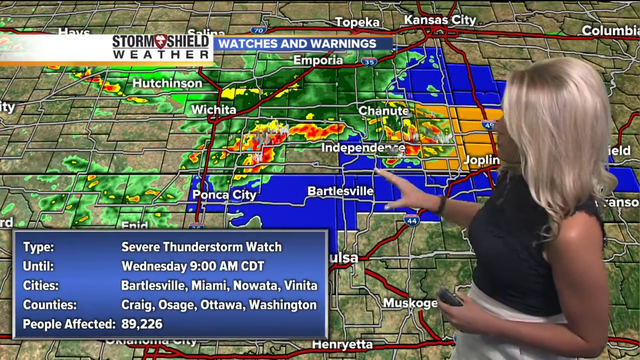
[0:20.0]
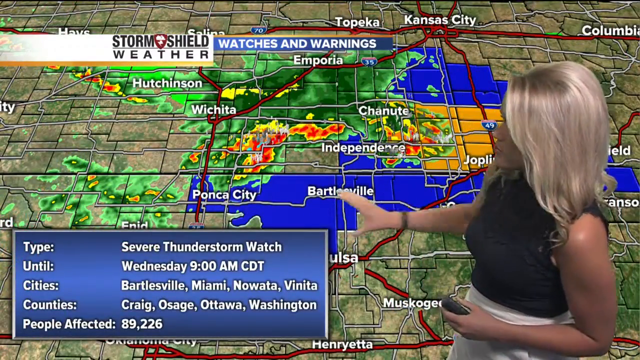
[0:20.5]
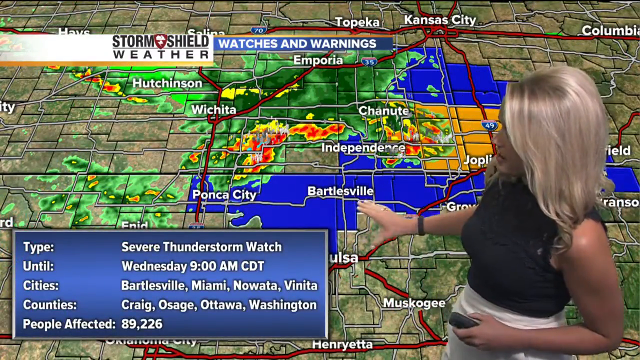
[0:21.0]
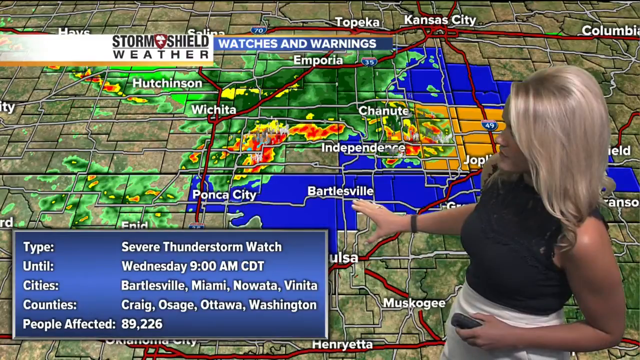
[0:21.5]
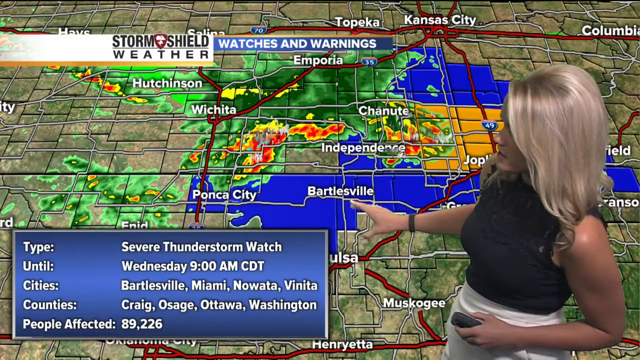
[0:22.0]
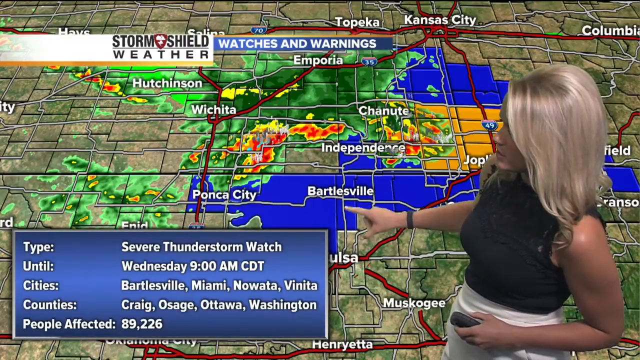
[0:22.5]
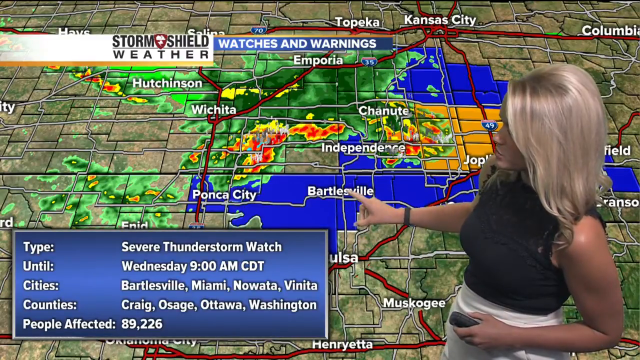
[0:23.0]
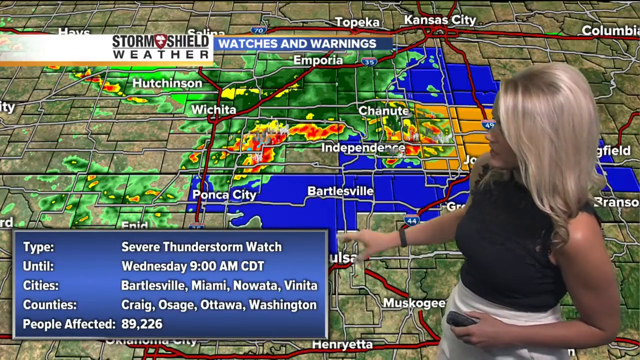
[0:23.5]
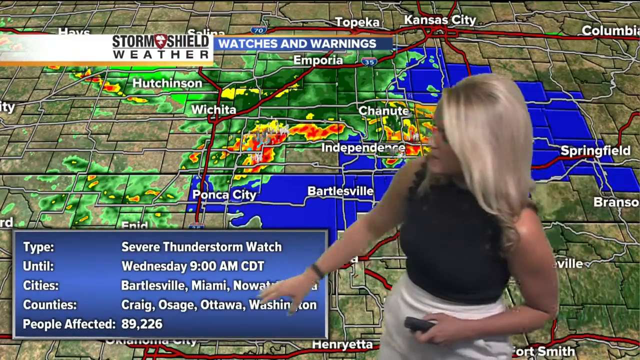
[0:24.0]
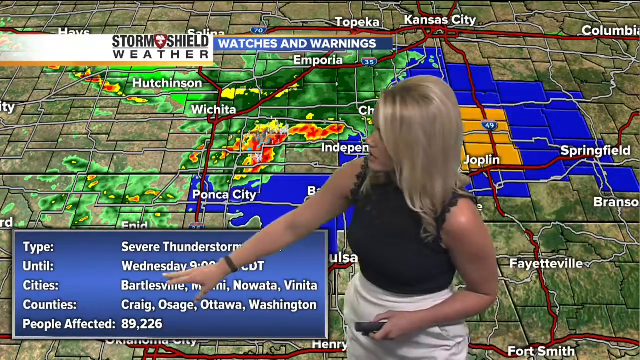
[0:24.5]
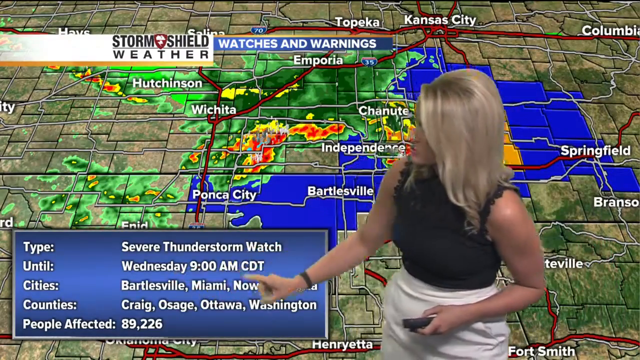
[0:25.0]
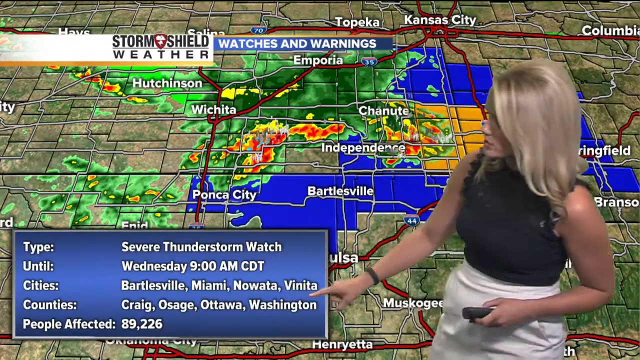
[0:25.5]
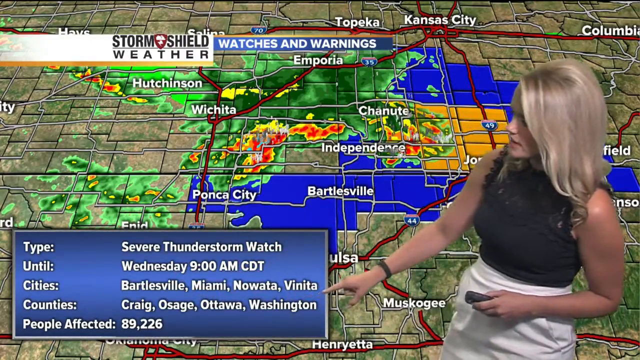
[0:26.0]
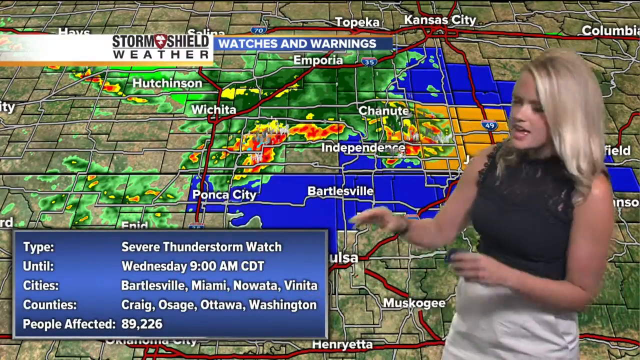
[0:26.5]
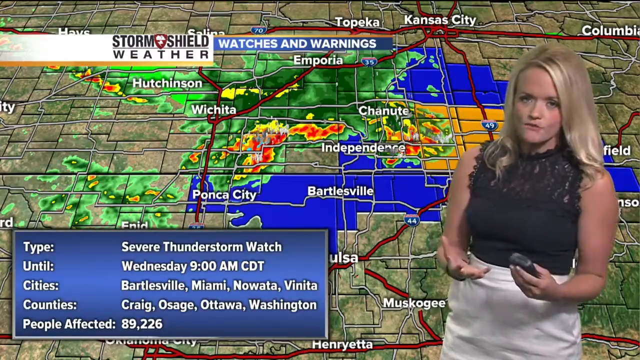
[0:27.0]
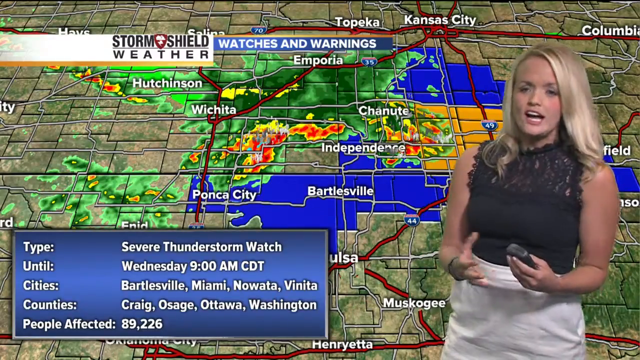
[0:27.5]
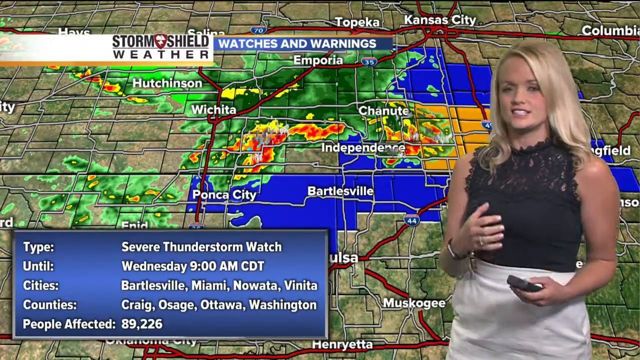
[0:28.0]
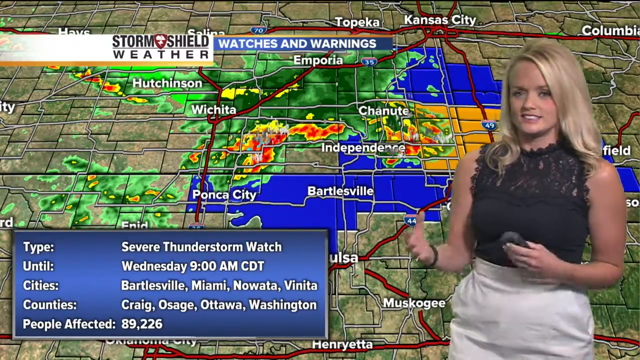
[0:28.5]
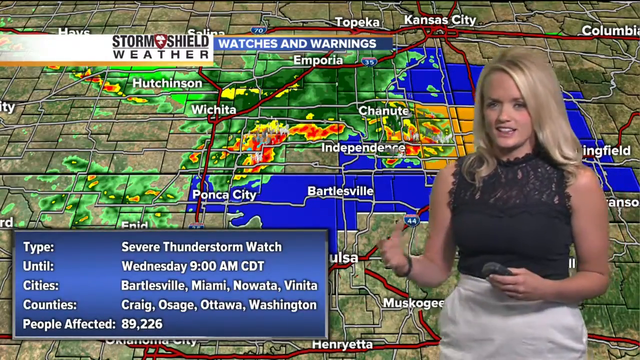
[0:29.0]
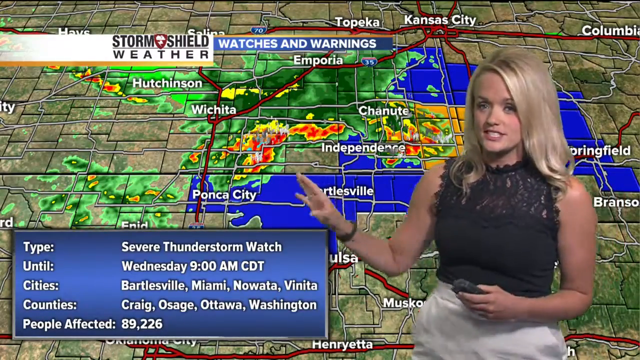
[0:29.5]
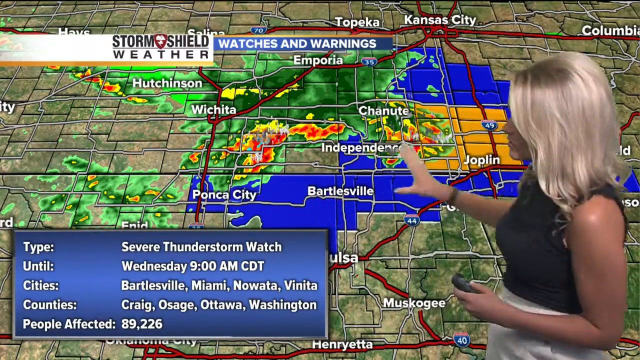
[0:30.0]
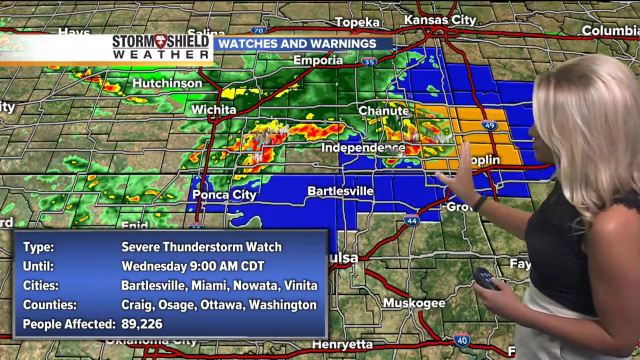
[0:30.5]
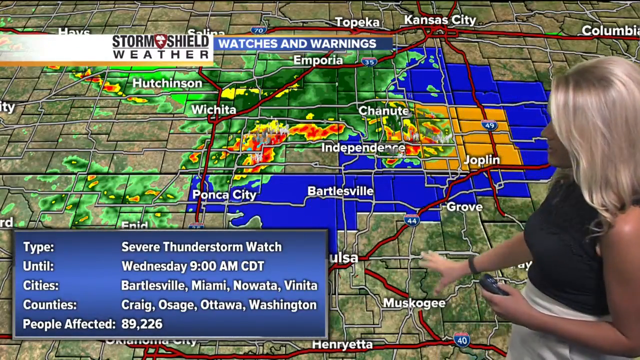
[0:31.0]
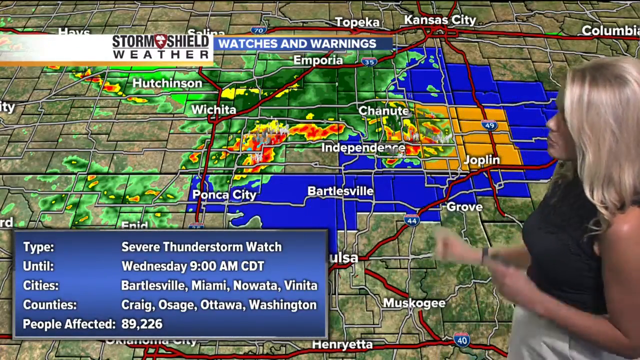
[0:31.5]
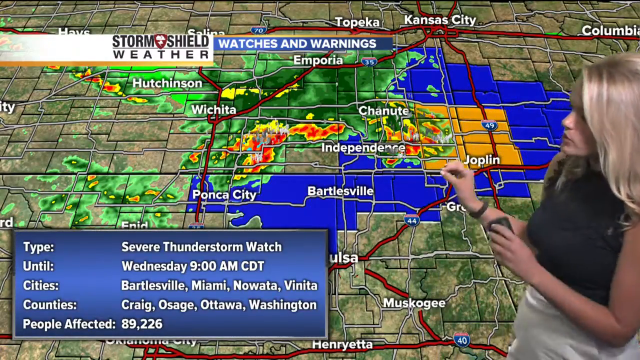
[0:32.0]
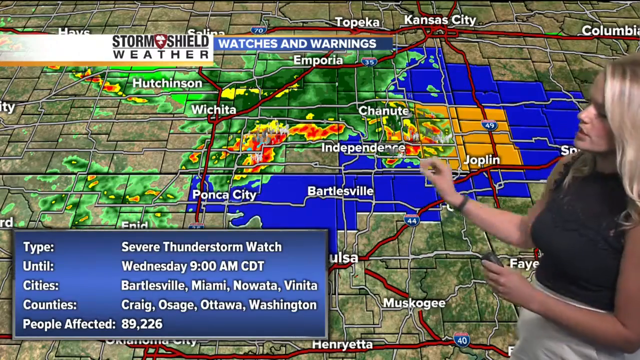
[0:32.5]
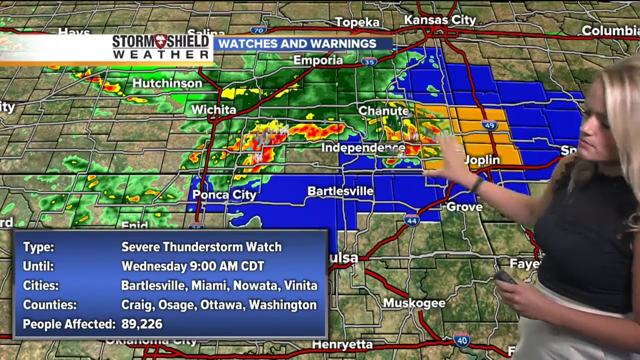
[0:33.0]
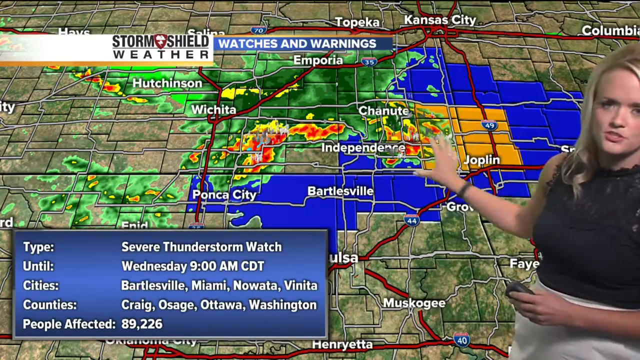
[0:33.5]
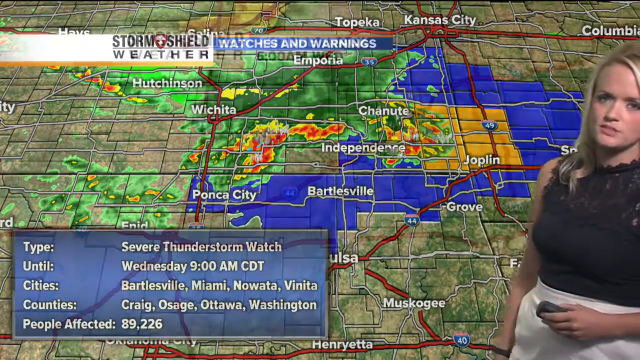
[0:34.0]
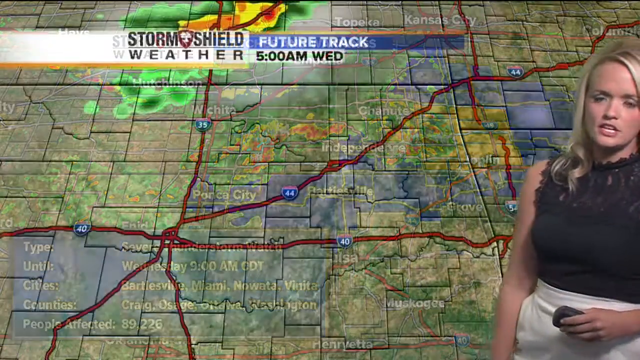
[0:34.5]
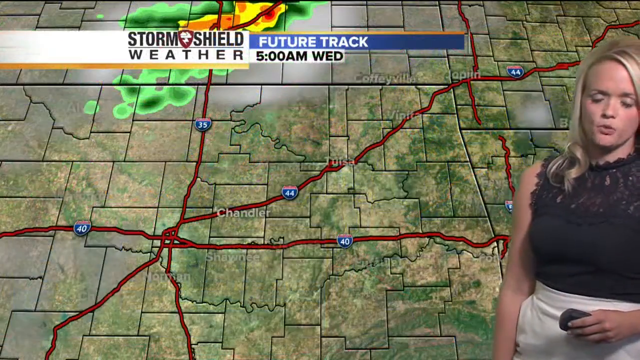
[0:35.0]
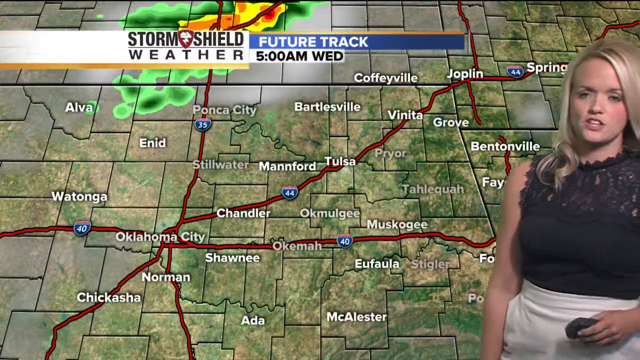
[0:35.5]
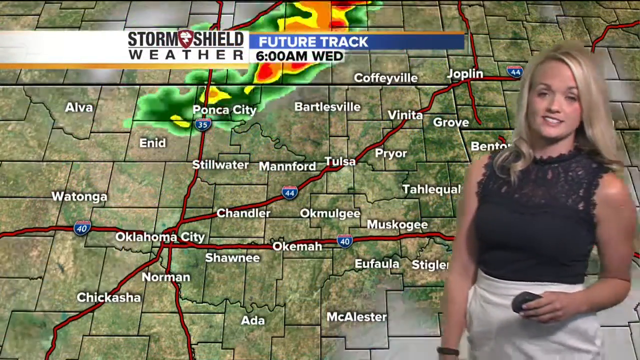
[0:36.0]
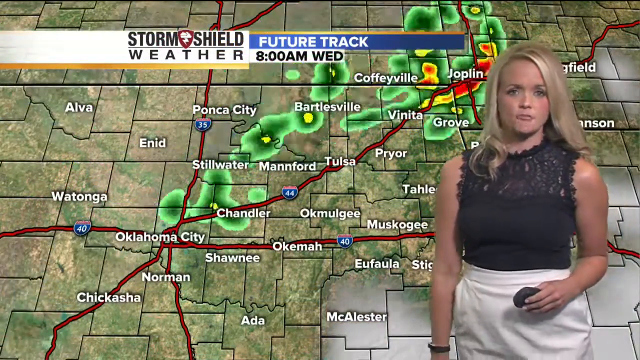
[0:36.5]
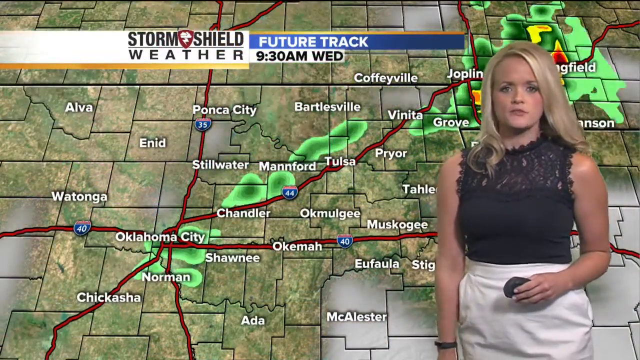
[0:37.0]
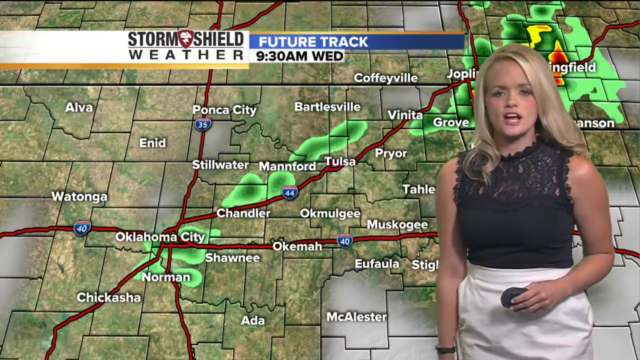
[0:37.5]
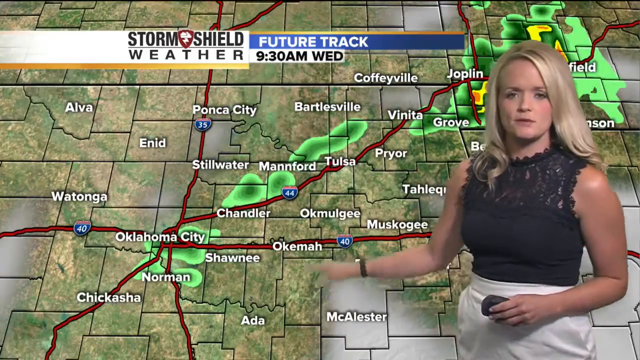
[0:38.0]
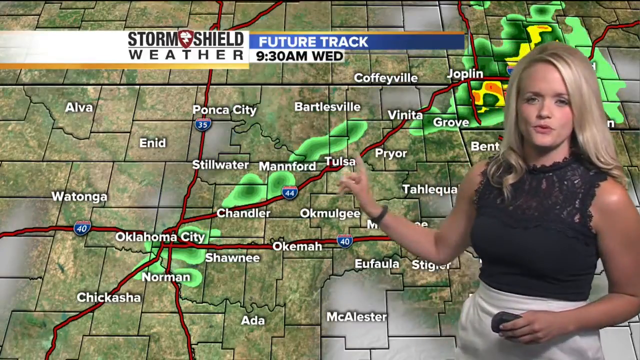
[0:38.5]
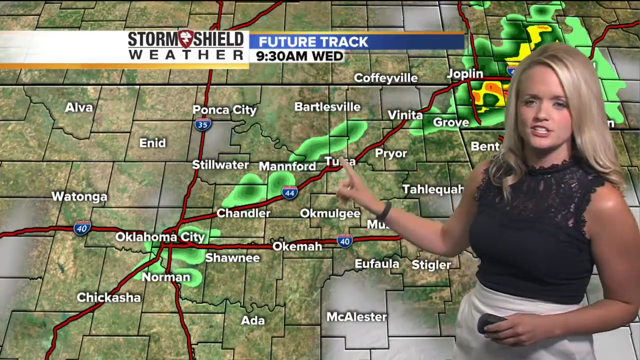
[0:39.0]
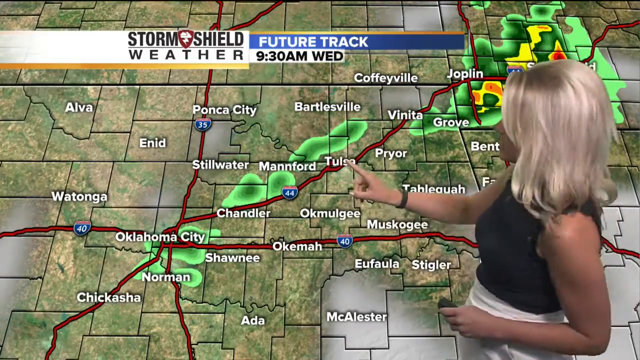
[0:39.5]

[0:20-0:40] A flat weather map is shown. In the center are some blue squares and blue sections, cordoned off to show where the storm is possibly landing. The map is green, with dark lines cutting it into sections for the different counties. A blonde woman in a black shirt and white skirt is on the right-hand side of the screen, holding some form of remote and moving in a very animated way as she shows the map. The storm is highlighted in green and rolls across the map, with more severe parts in yellow and orange and, in some cases, very severe parts in dark purple. The storm is somewhat large and irregularly shaped, taking up the northwest part of the map and rolling down, seemingly toward the other counties. In the bottom corner is a small blue rectangle stating that there is a severe thunderstorm watch until Wednesday 9 a.m. and listing the cities involved. Above the woman is Kansas City. Red lines connect the cities like roads, and small blue shields on them mark them as highways.